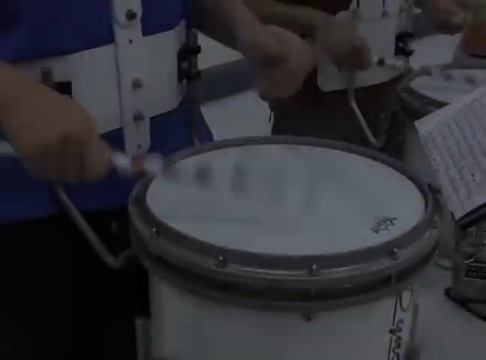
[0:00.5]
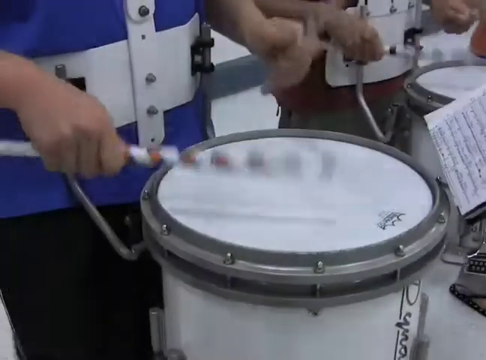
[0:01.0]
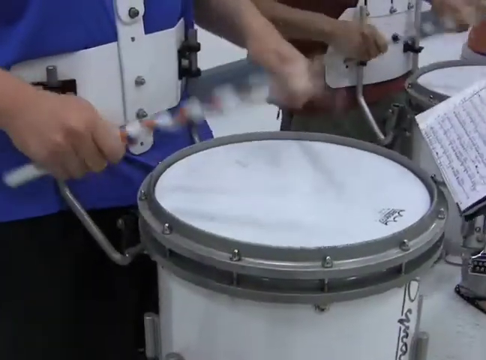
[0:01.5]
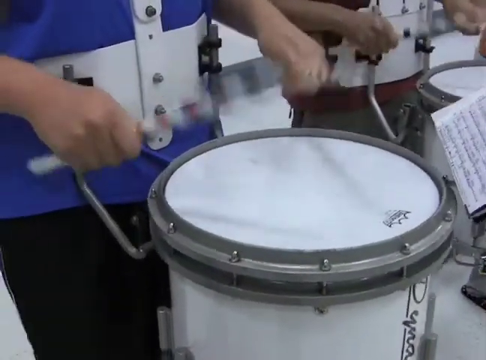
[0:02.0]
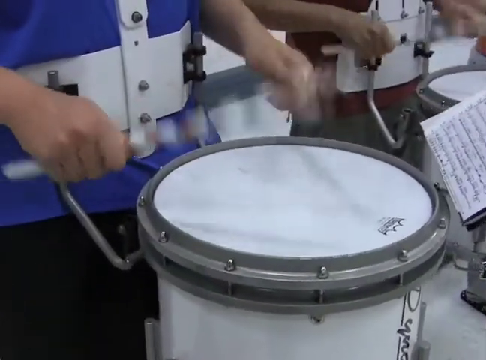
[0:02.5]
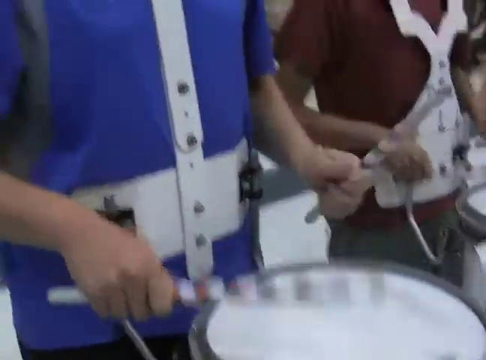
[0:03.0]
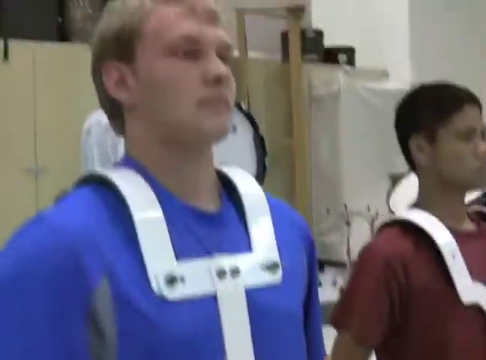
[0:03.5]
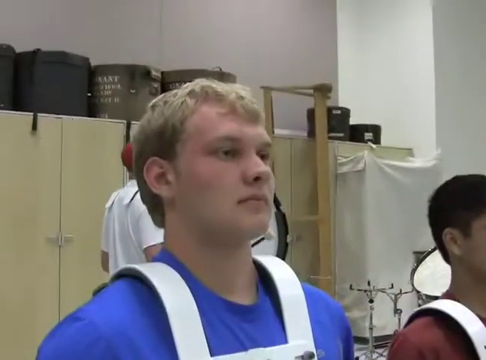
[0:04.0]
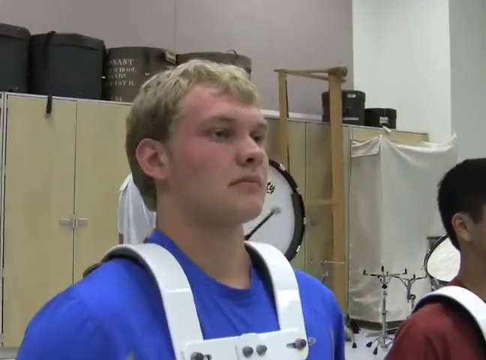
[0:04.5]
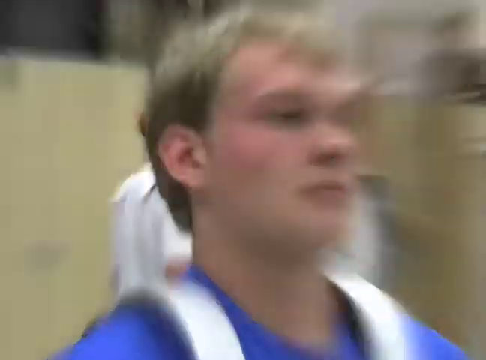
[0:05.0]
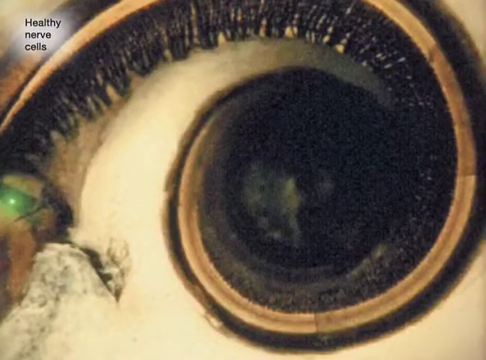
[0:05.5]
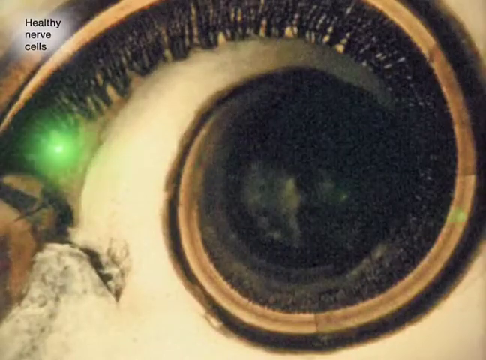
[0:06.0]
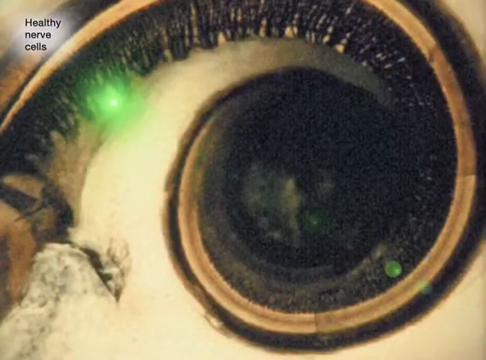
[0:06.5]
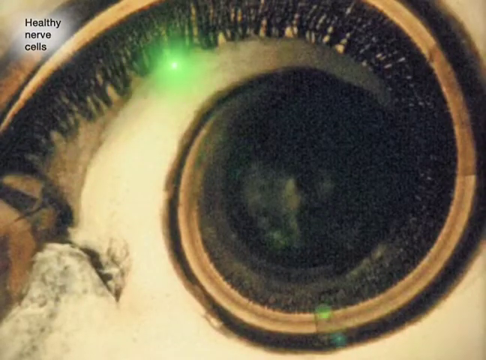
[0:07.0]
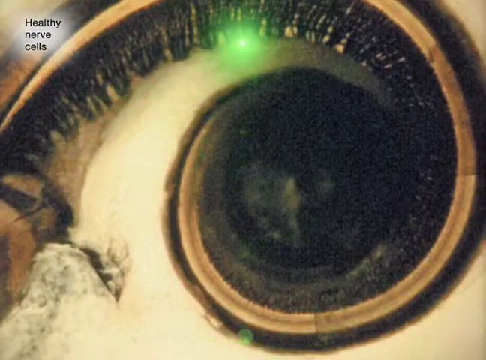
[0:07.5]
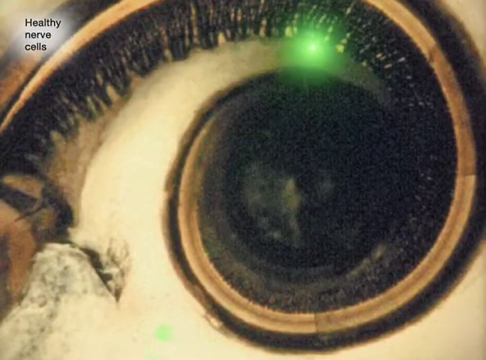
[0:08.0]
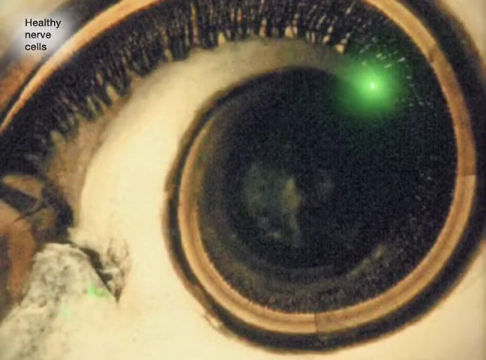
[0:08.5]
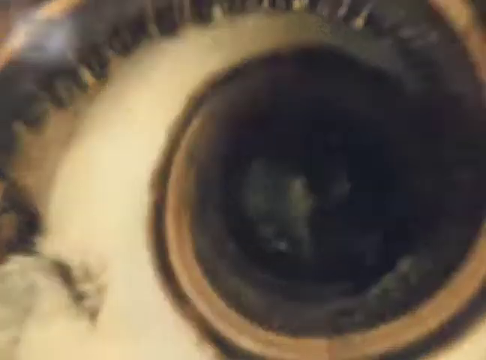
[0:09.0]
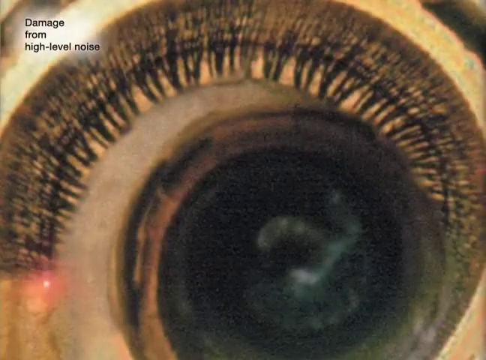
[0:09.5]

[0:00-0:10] The video opens zoomed in on a drum that looks like a tall, long type of snare drum. It is attached to someone by a metal bracket around their waist, the kind of drum worn in a marching band. The person is playing the drum. Sheet music is in front of them on some kind of metal holder, and the setup looks hands-free: both the drum and the sheet music are attached to the same bracket. The main player wears a blue shirt, and someone in a red shirt is playing in the background. The camera pans up to the player's face; they are apparently looking straight ahead, not at the sheet music. The video then zooms in on their ear and shows a diagram of some sort of eye or ear, depicting healthy nerve cells, followed by "damage from high-level noise."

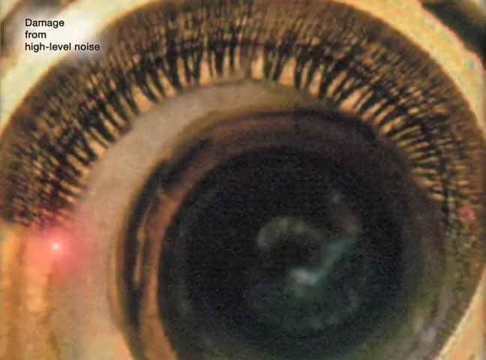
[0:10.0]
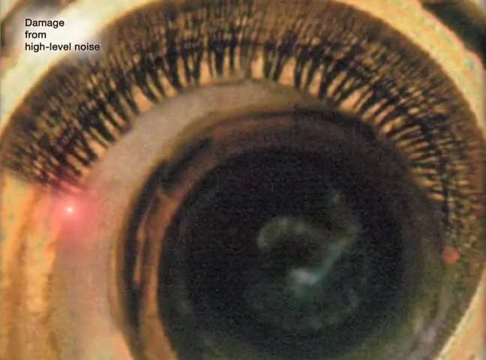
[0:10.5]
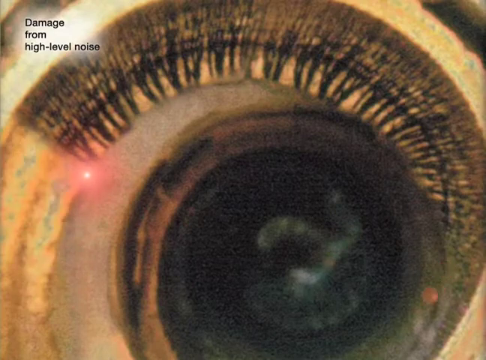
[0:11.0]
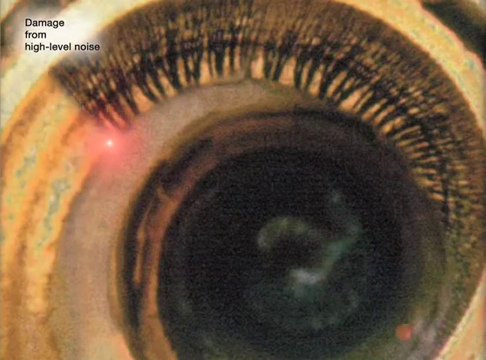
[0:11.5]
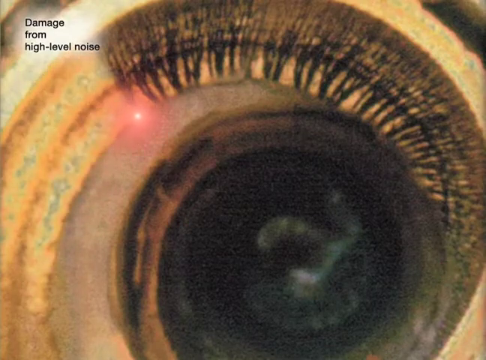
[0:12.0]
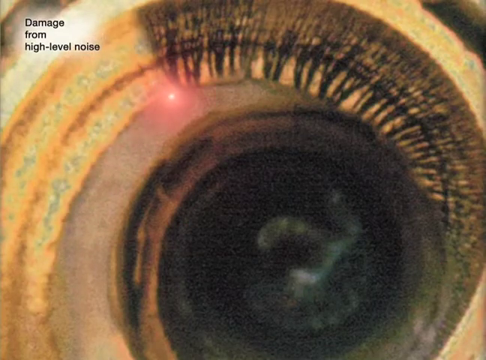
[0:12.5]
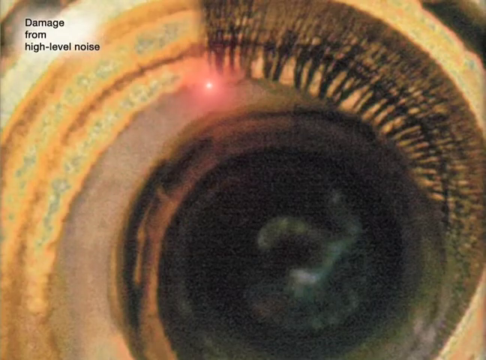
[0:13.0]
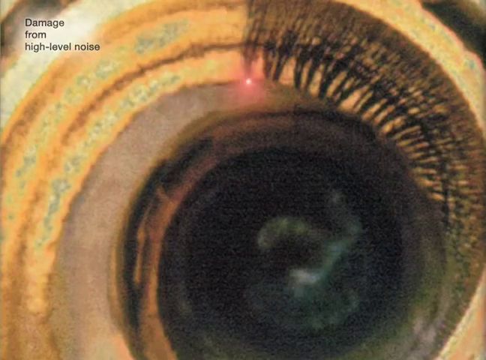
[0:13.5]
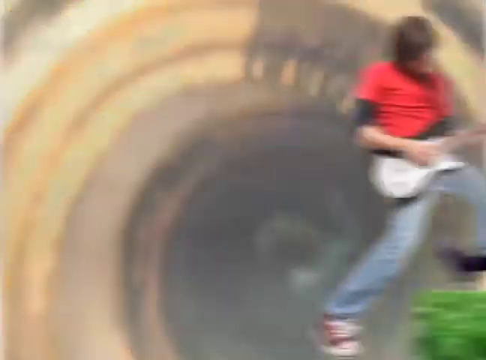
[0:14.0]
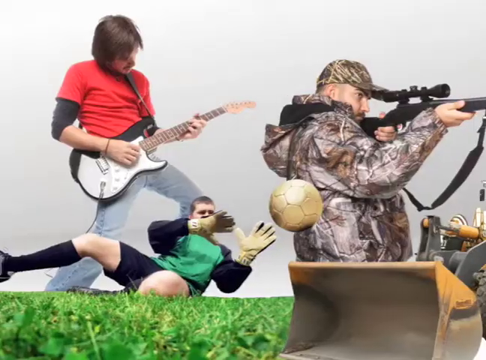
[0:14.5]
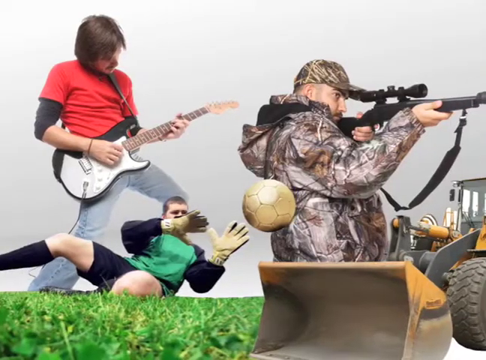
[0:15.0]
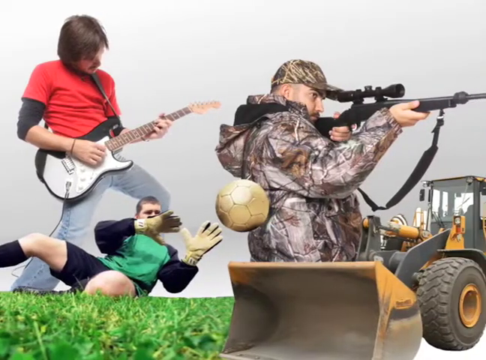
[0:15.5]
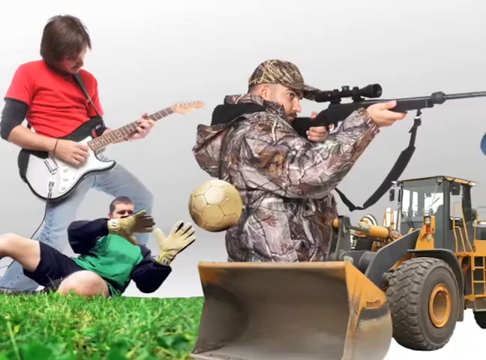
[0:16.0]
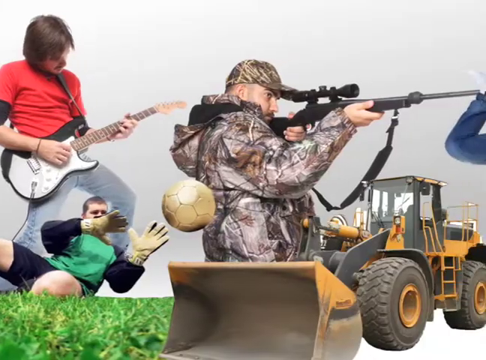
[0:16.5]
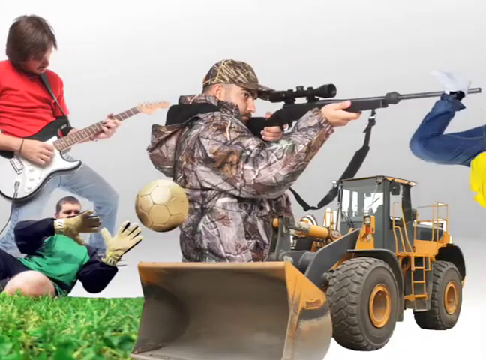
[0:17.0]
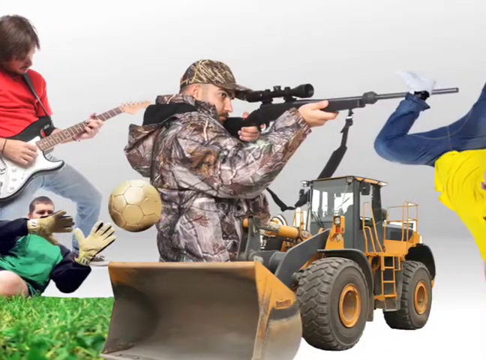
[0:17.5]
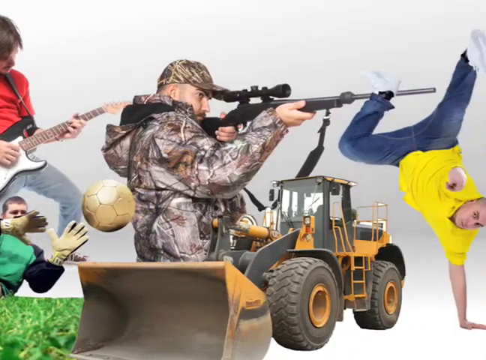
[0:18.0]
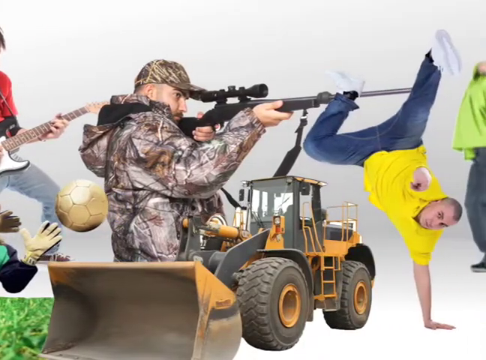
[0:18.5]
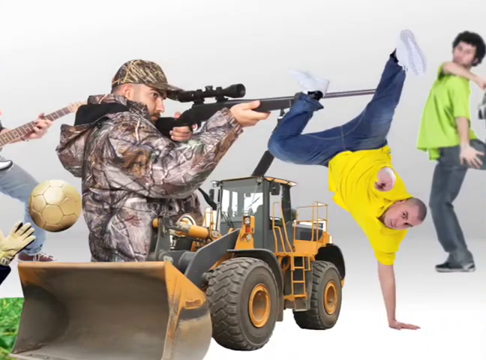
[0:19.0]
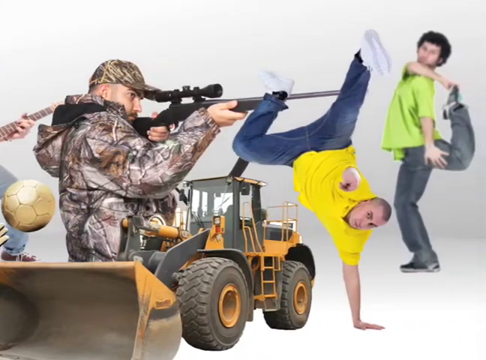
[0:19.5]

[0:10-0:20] An extremely zoomed-in view seems to show an eardrum, though it is hard to tell it is an ear; it almost looks like an eye. It has a rounded shape like an ear, a light animation plays around the circle, and there is a black circular thing in the middle, hard to make out because of how zoomed in it is. An overlay then seems to show a person in a red shirt with a black shirt under it and jeans. The view pans over to show someone playing guitar, someone in camouflage shooting a gun, and someone on the ground catching a ball, like in soccer. A construction vehicle comes up, and then someone does a handstand.